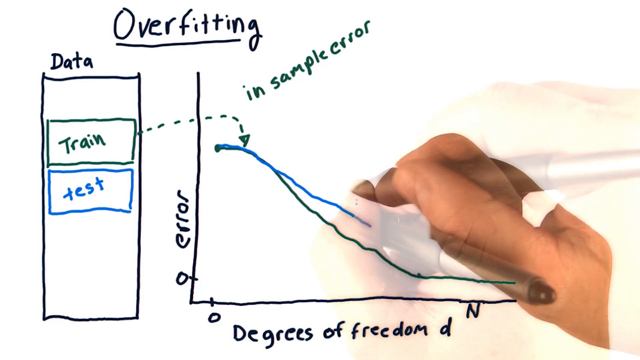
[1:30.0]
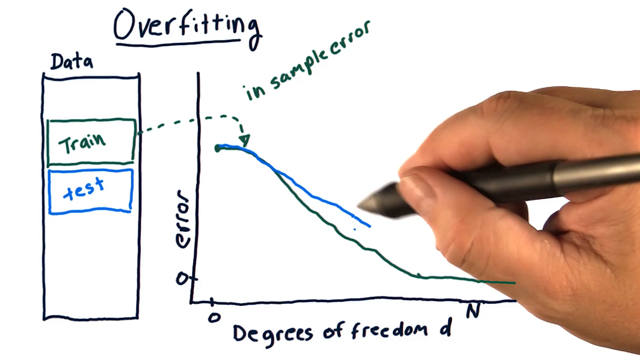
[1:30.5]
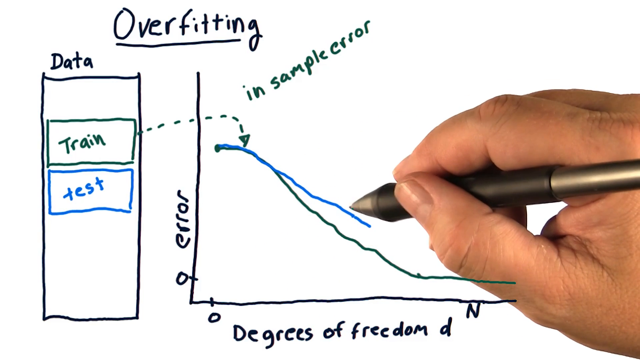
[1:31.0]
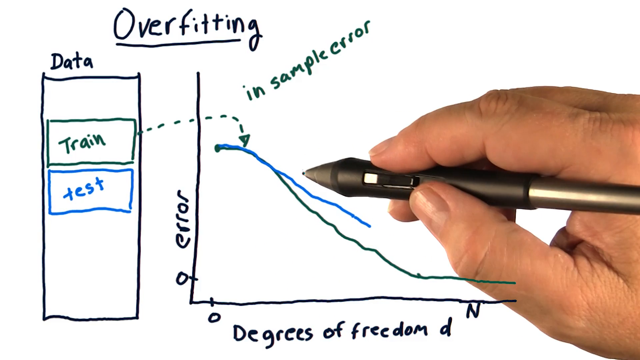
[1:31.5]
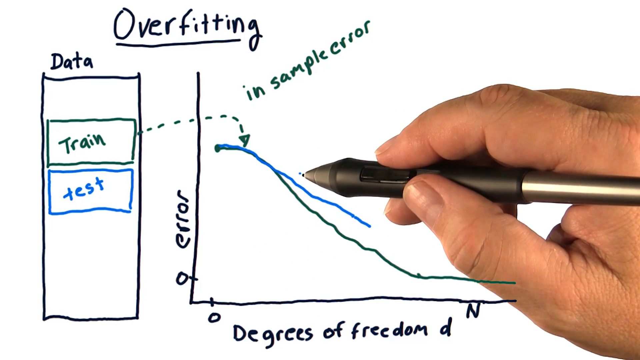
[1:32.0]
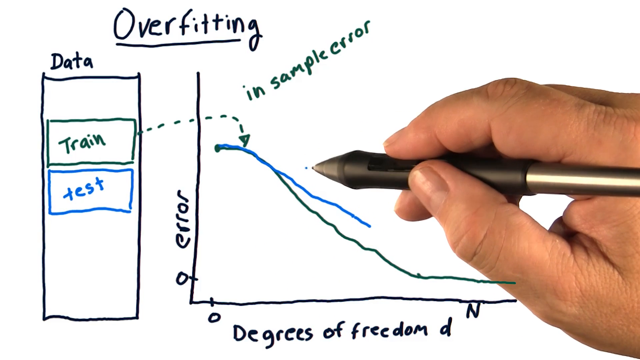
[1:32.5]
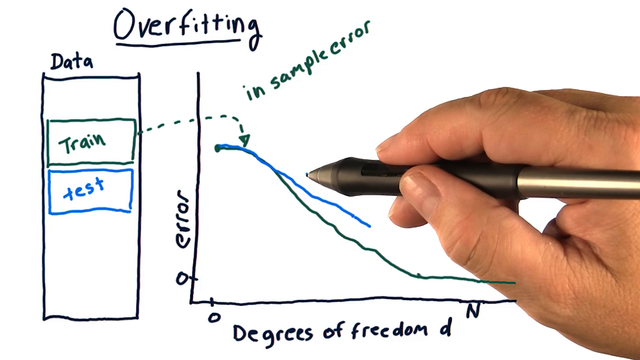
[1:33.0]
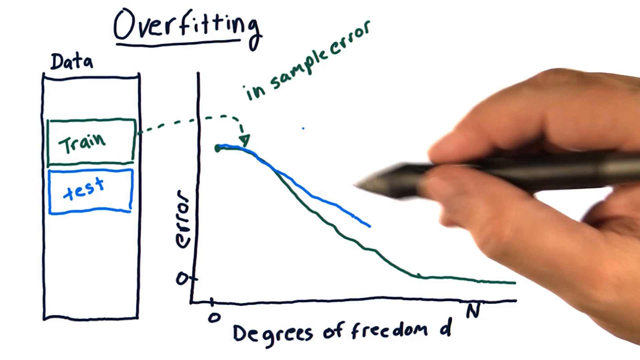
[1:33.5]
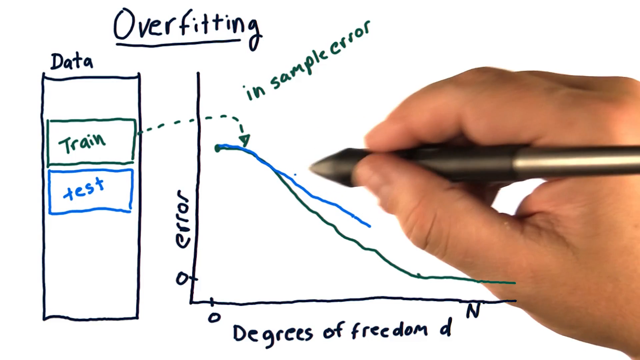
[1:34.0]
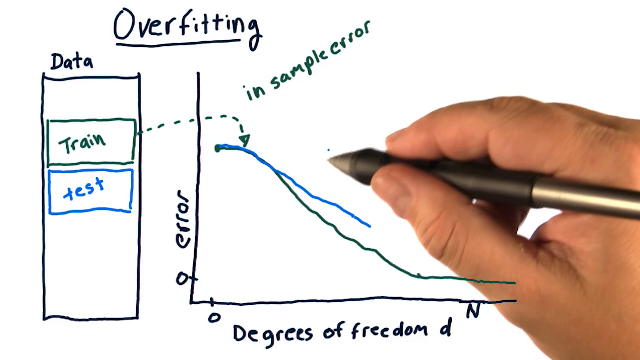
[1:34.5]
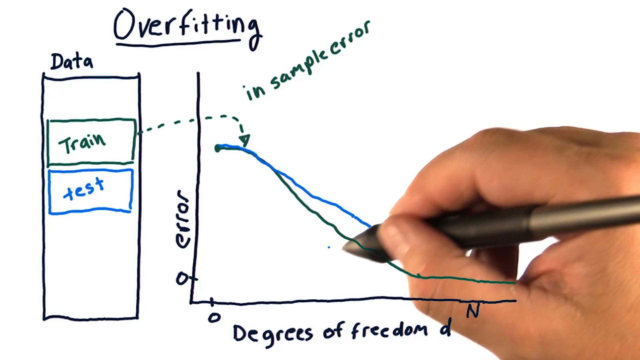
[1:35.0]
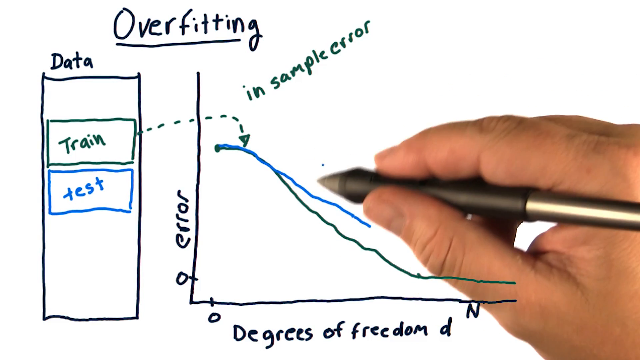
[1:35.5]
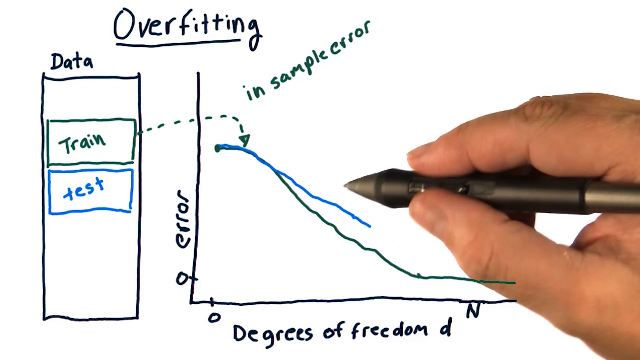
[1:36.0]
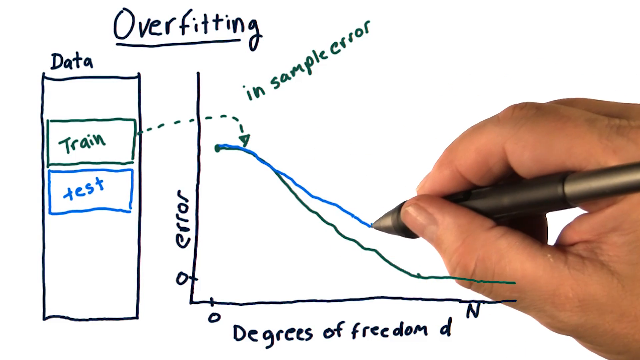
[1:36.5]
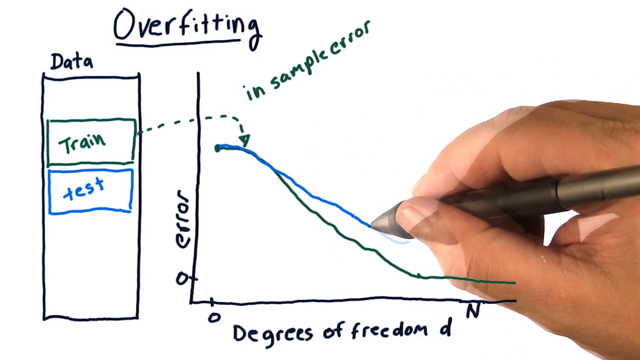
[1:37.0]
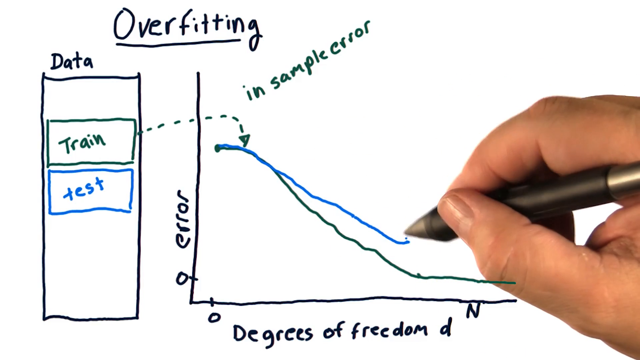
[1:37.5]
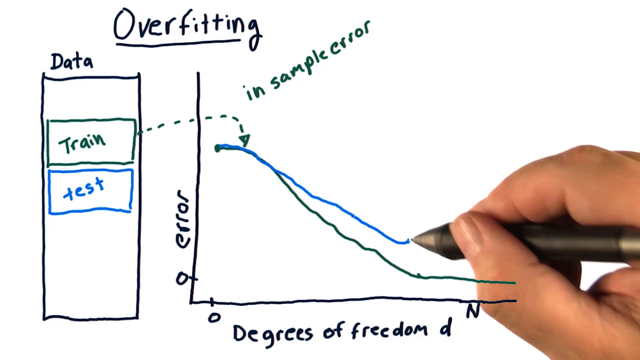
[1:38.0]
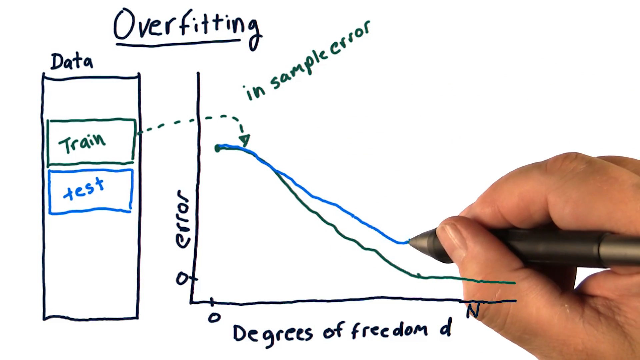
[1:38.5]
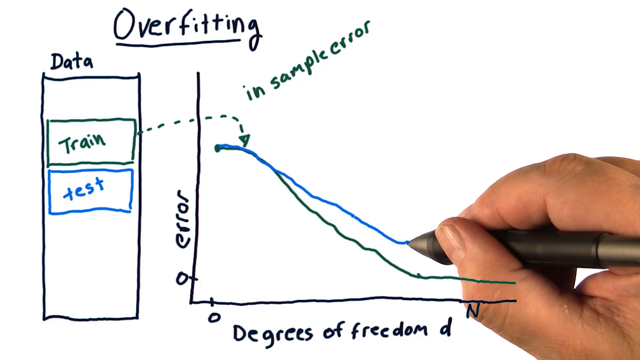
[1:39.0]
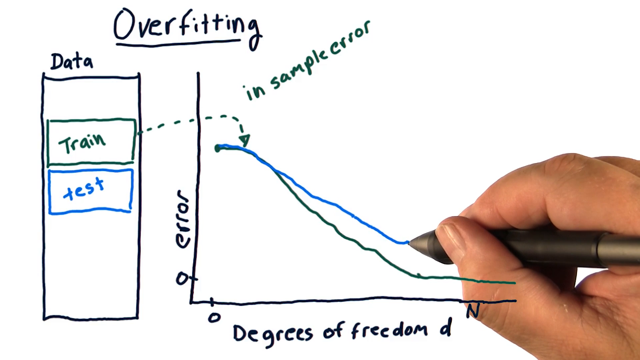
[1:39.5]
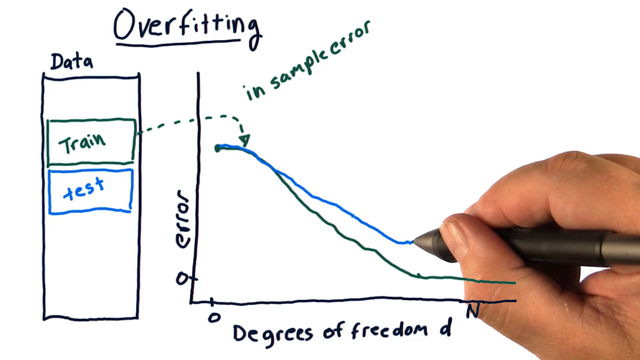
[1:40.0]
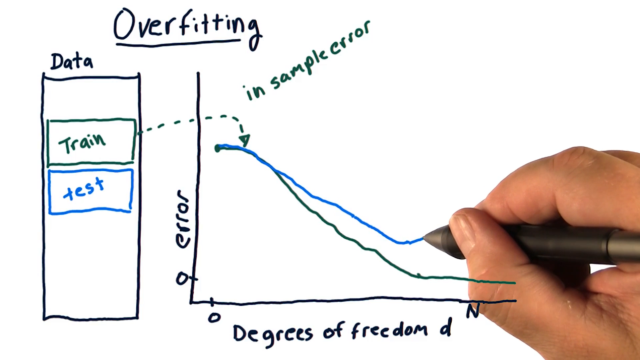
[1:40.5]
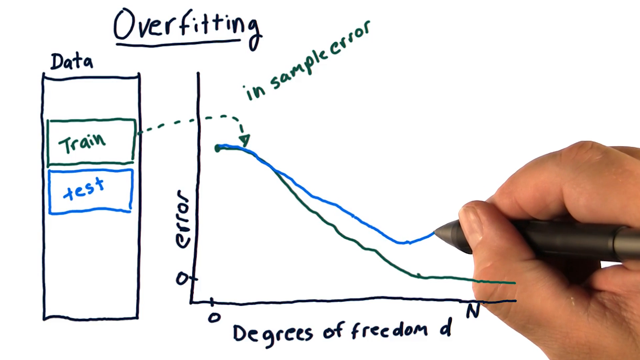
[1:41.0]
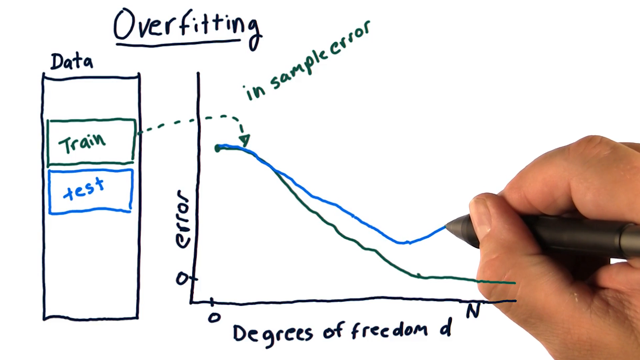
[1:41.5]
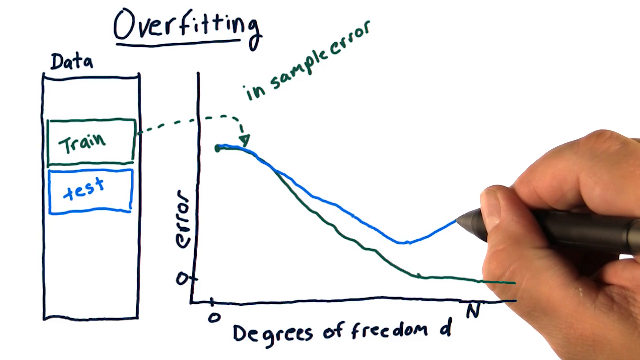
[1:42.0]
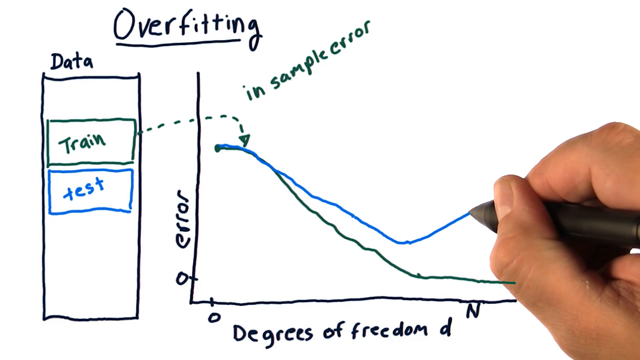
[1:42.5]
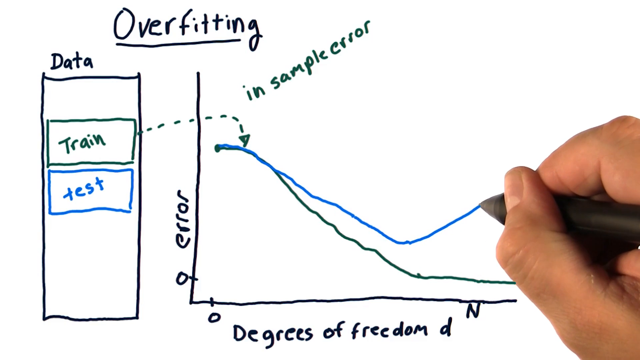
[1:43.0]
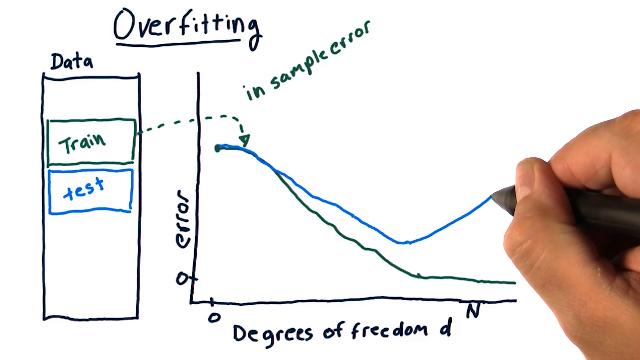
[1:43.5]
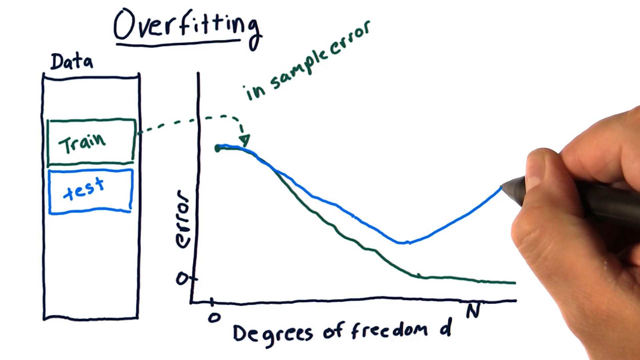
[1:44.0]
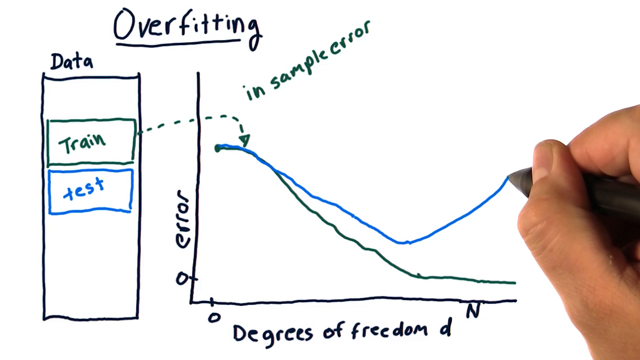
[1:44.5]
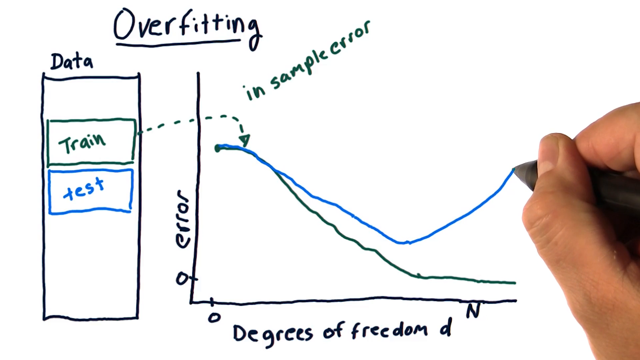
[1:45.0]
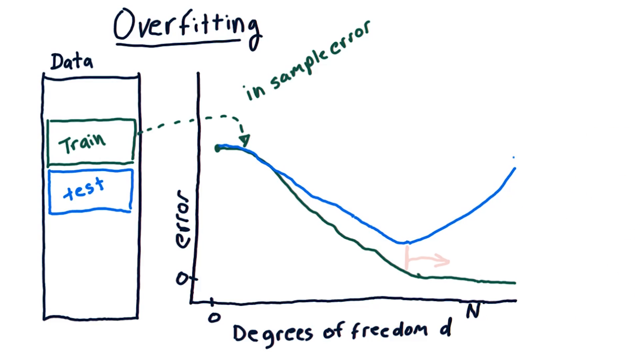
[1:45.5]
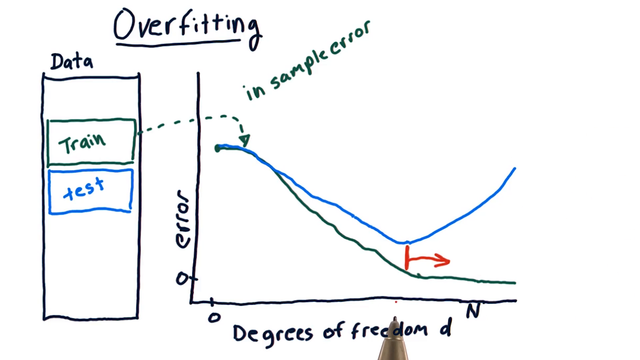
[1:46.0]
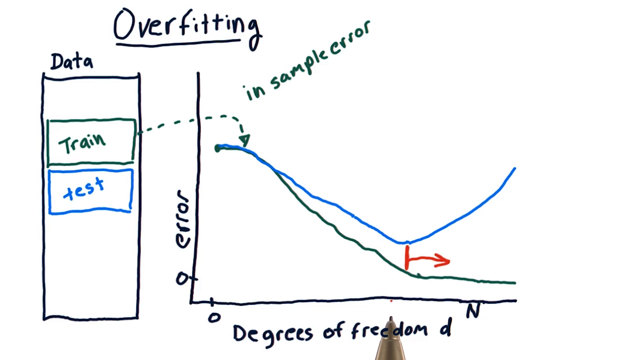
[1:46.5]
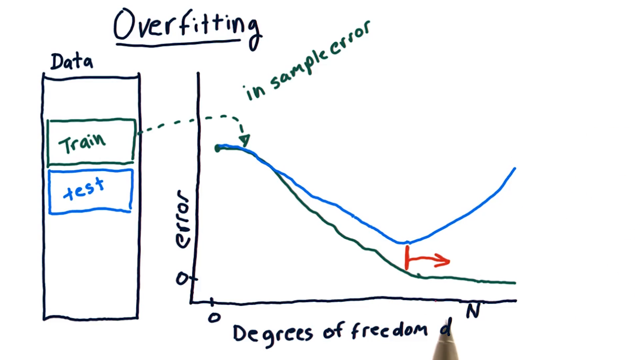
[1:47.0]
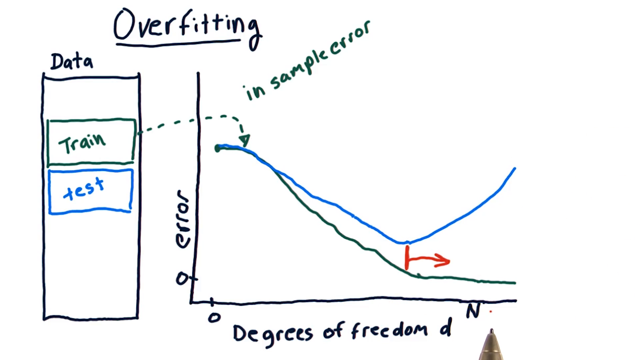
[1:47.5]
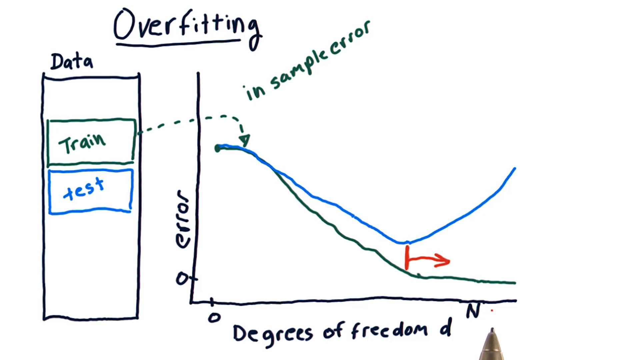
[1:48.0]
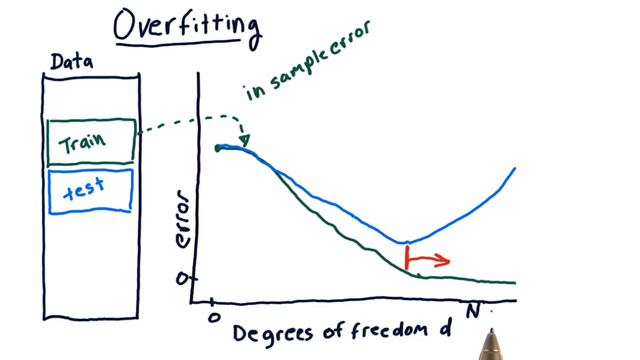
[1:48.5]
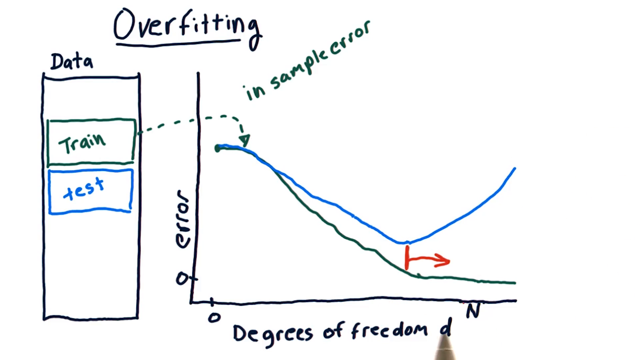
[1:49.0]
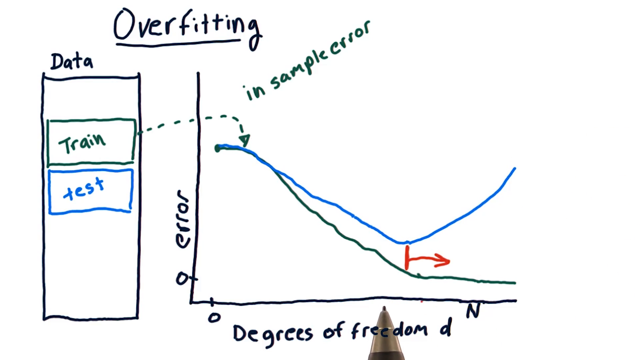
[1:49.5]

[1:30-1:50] The graph appears to be handwritten, with the title "overfitting" at the top. On the left is a rectangle with "data" above it; inside are a green rectangle with green text reading "train" and a blue rectangle reading "test". On the right, the graph's y-axis is labeled "error" with 0 at the bottom, and the x-axis is labeled "degrees of freedom, D" with 0 on the left and N on the right. A green line goes from the top, slopes downward and becomes horizontal at zero on the right side. A right hand holding a pen appears at the bottom right and draws a blue line from the same starting point as the green line, also sloping downward but more shallowly, so it is above the green line. The pen and hand circle counterclockwise around the center of the blue line, where it is above the green line, before continuing to draw it toward the right; it appears to level off horizontally and then slopes upward at the right end, so the blue line goes down and then up. What looks like a red vertical line then appears at the lowest point of the blue line, extending to the green line, with a right arrow on it; it appears without the hand drawing it. The pen and hand seem to point from the red line toward the right, emphasizing something along the x-axis.